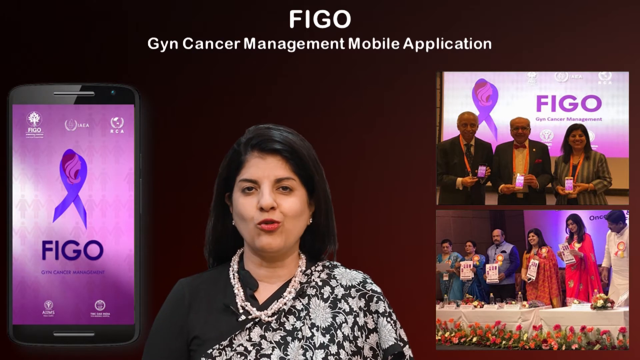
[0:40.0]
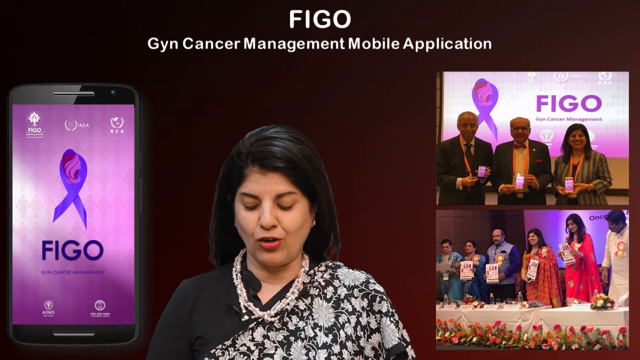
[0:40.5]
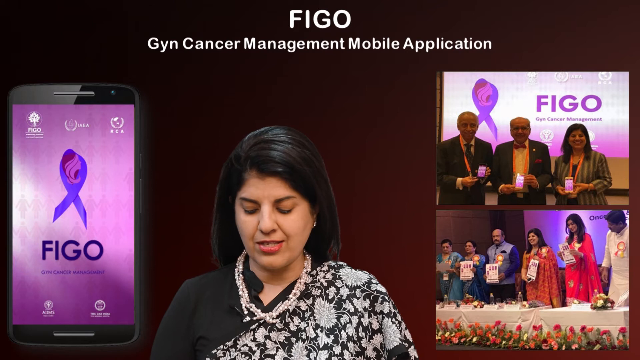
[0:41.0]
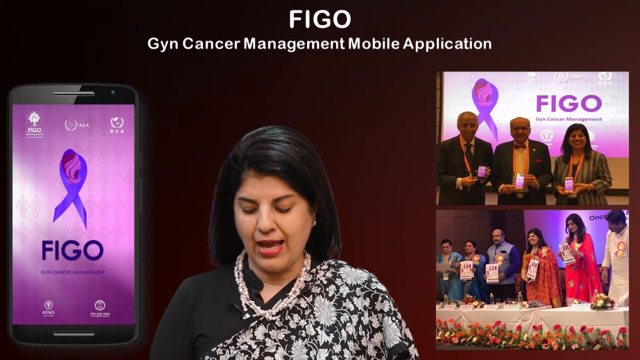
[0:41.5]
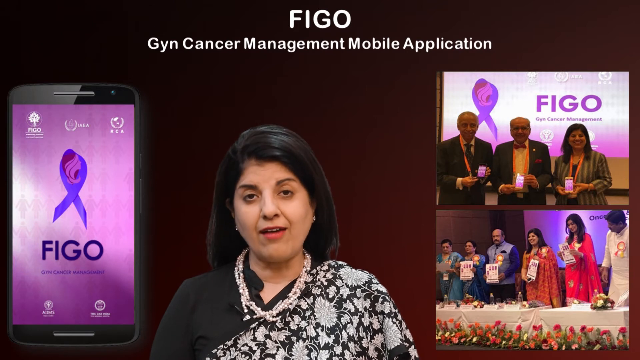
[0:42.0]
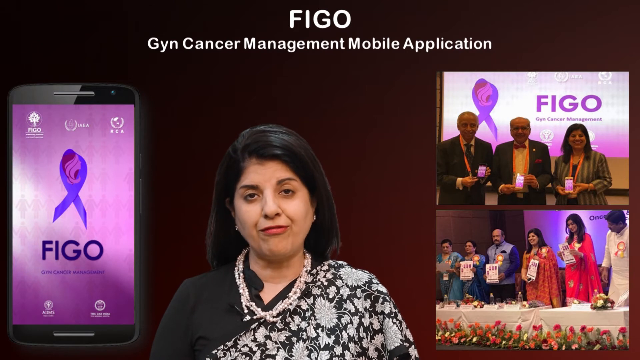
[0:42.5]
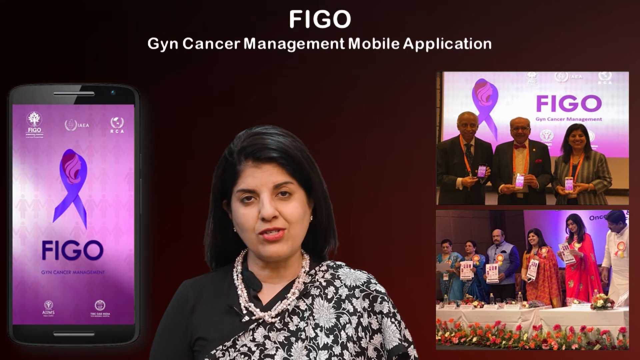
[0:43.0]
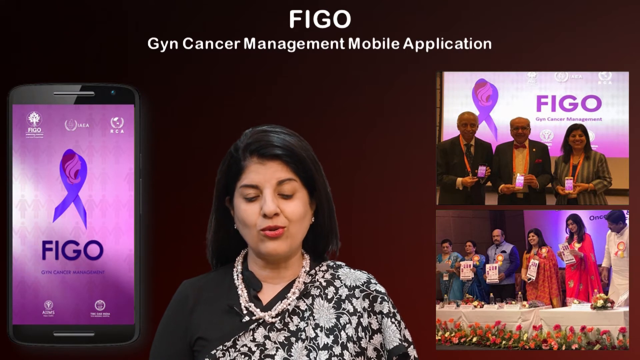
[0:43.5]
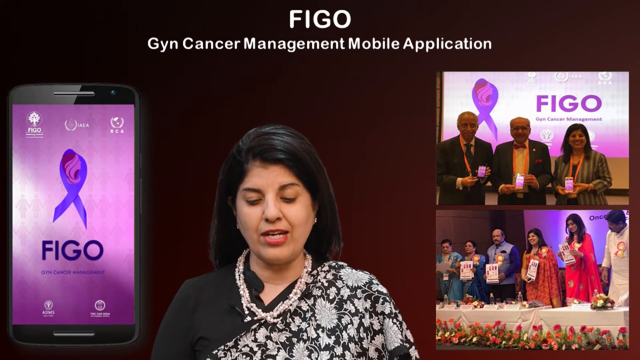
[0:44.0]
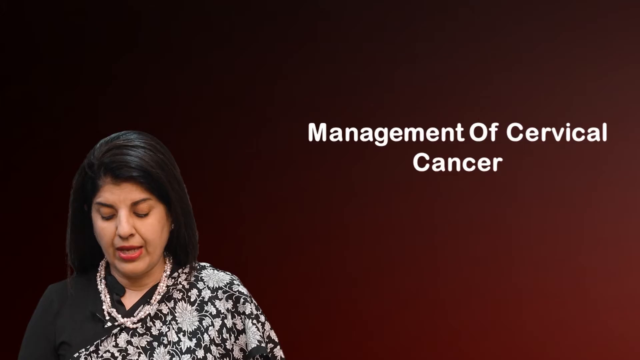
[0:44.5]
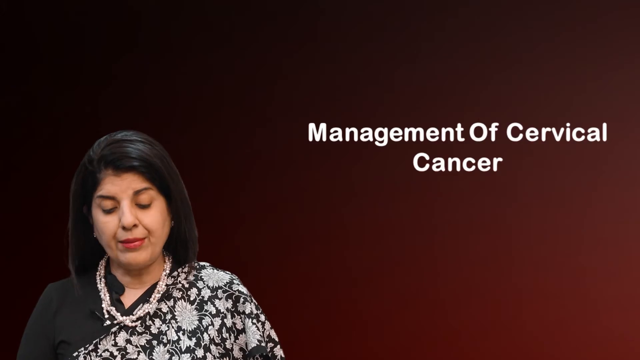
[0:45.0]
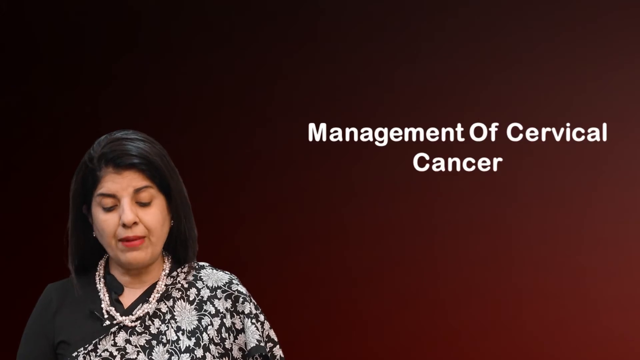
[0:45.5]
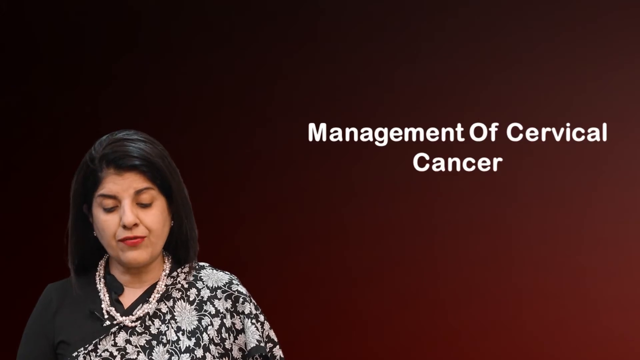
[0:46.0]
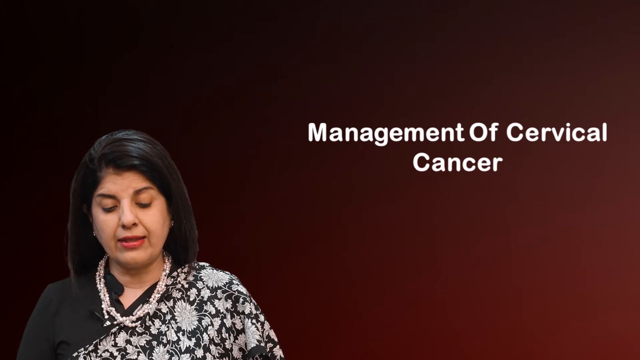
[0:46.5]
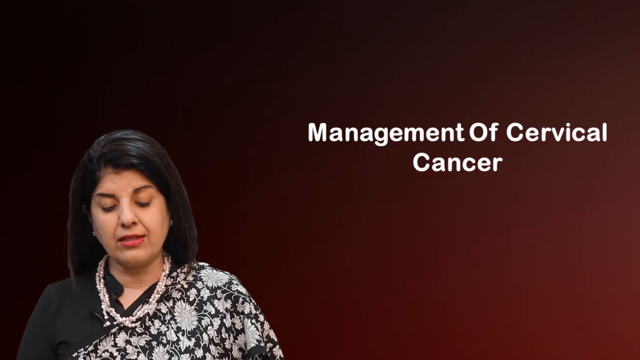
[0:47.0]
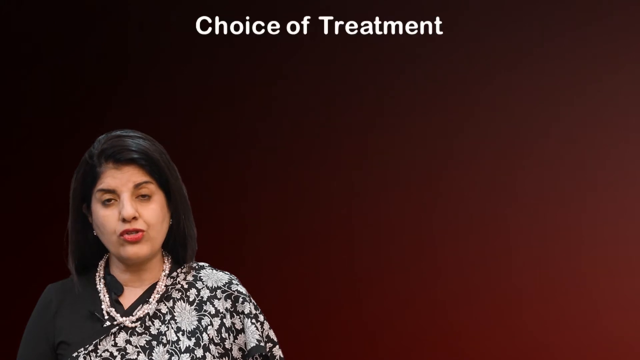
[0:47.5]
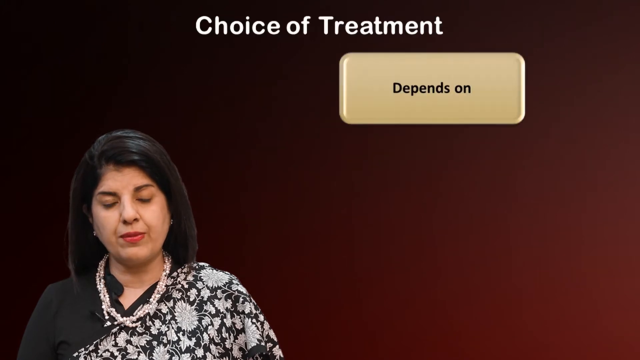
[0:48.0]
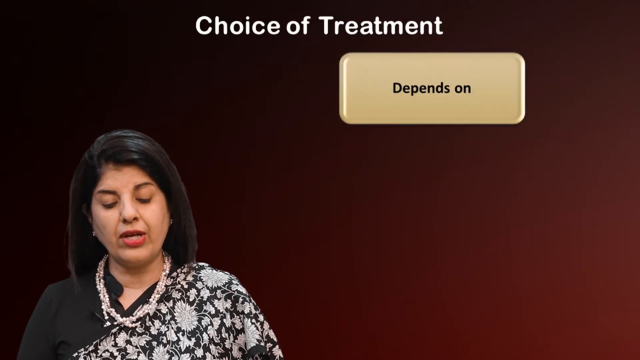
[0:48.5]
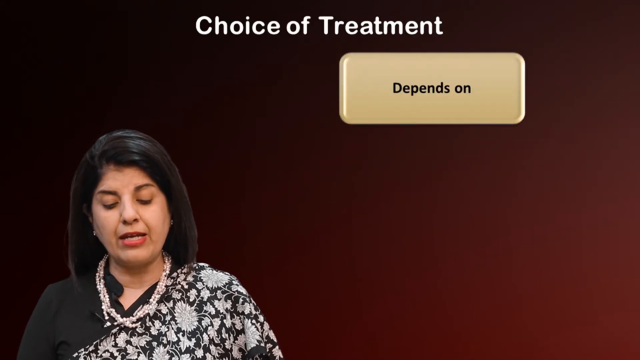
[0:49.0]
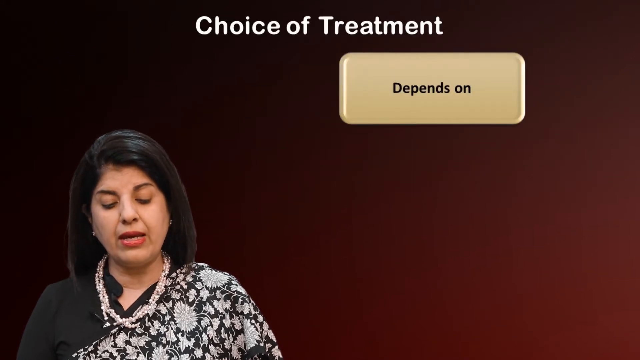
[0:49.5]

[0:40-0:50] The woman with the dark hair and the black and white flower blouse is now on the left-hand side of the screen. To her right is bold white text reading "Management of Cervical Cancer". Then a bubble screen appears with white text that says "Choice Treatment", and a little yellow button with black text says "Depends On". The video then returns to the original screen with the woman in front of the management app.